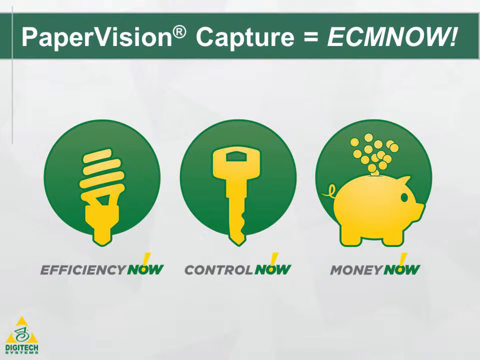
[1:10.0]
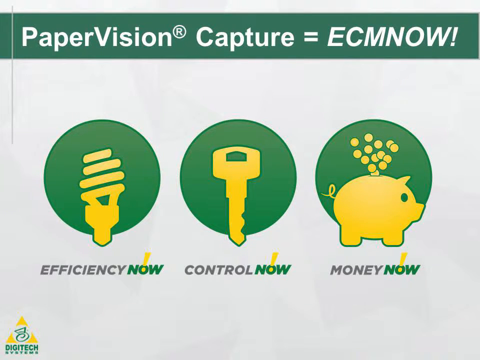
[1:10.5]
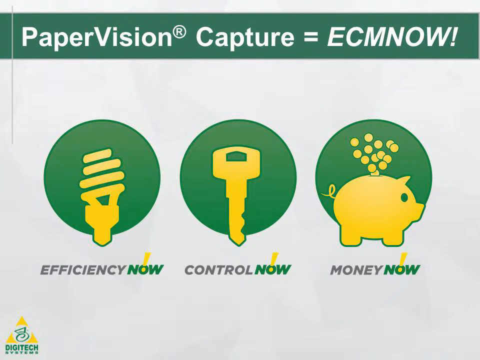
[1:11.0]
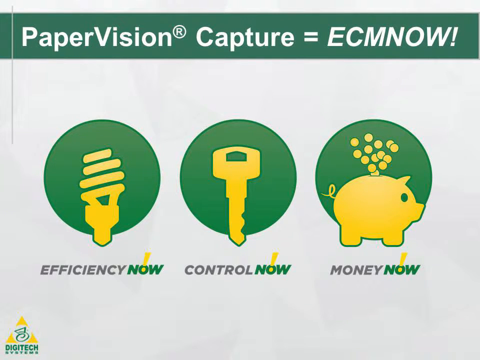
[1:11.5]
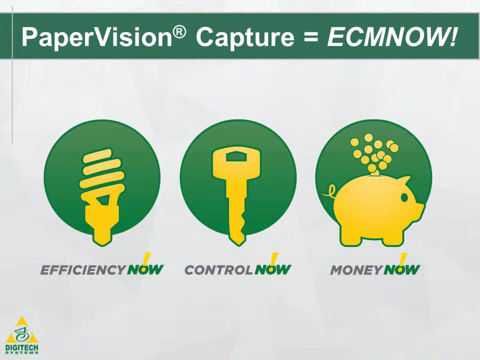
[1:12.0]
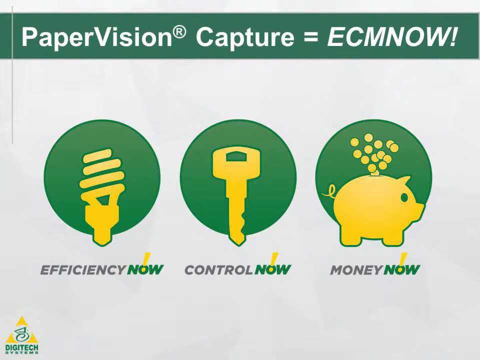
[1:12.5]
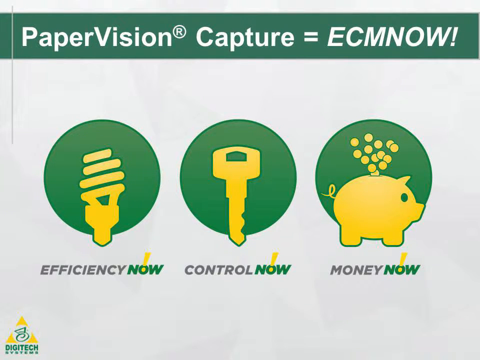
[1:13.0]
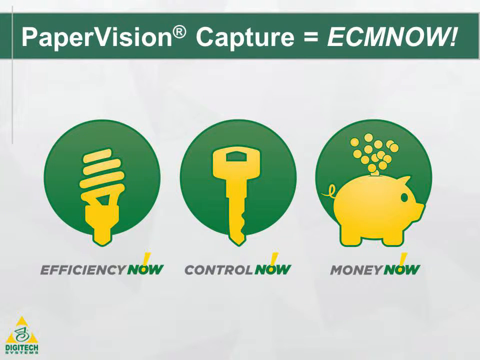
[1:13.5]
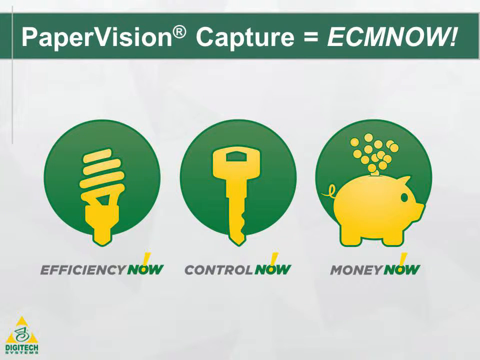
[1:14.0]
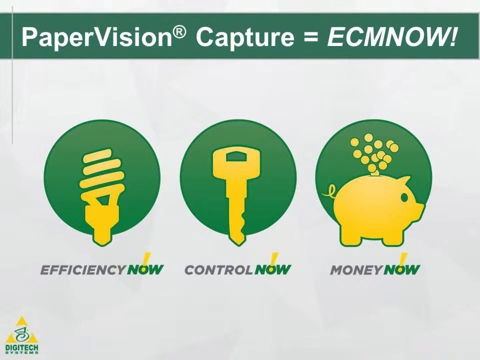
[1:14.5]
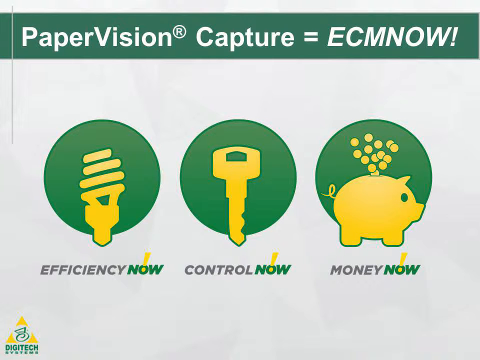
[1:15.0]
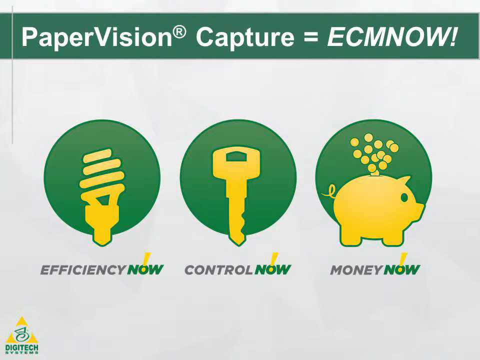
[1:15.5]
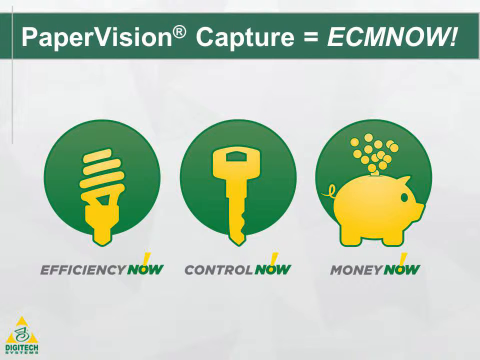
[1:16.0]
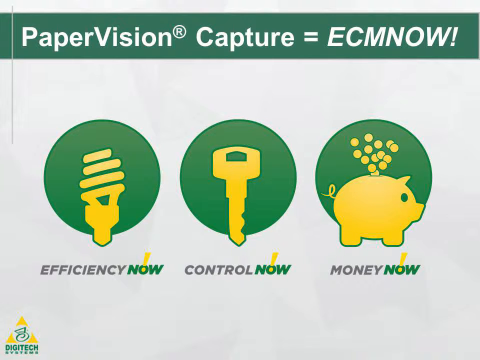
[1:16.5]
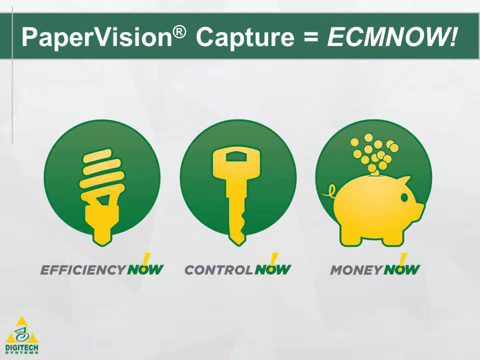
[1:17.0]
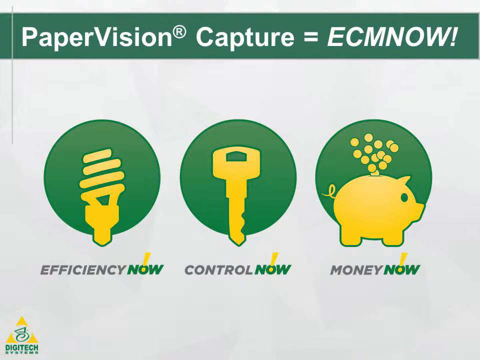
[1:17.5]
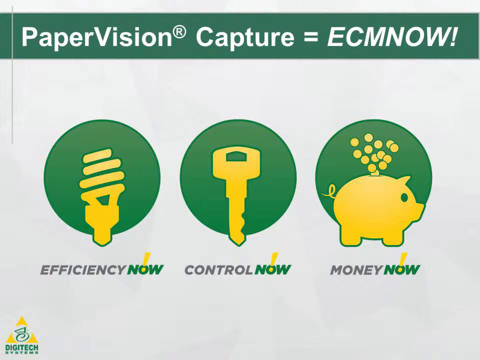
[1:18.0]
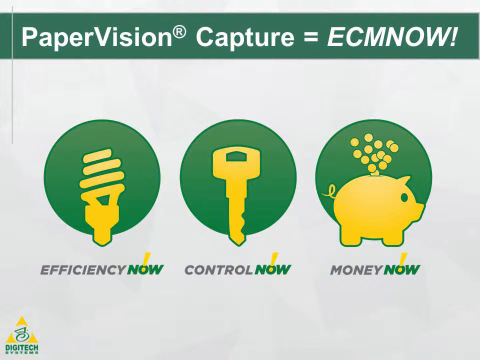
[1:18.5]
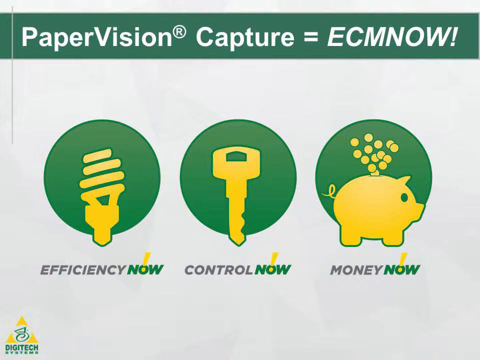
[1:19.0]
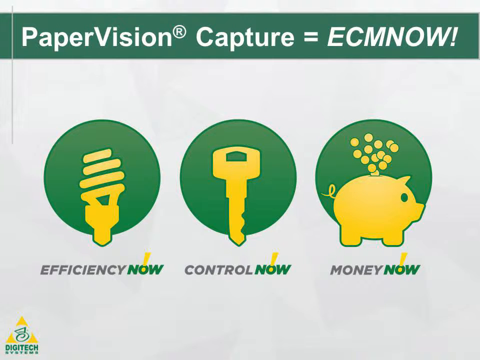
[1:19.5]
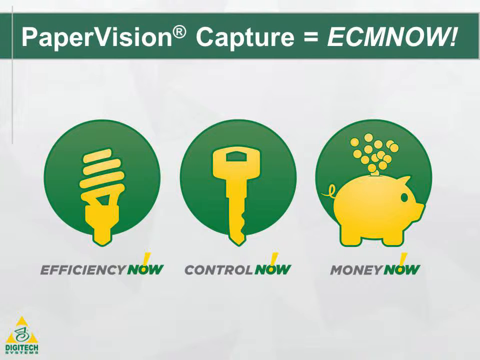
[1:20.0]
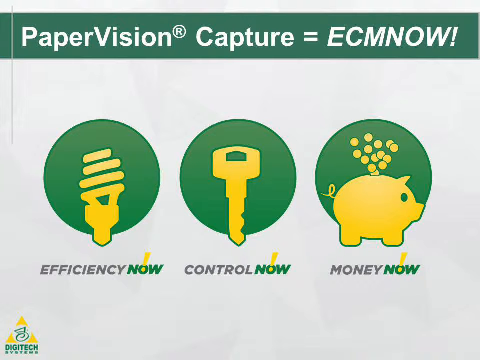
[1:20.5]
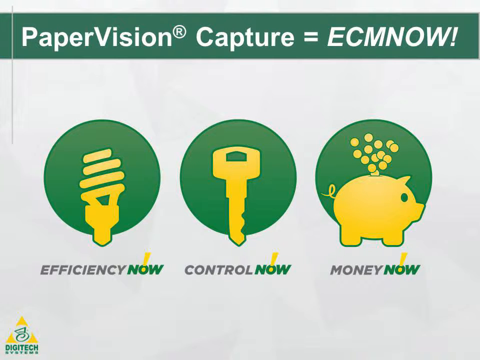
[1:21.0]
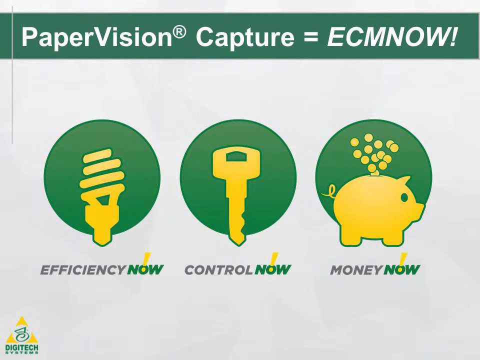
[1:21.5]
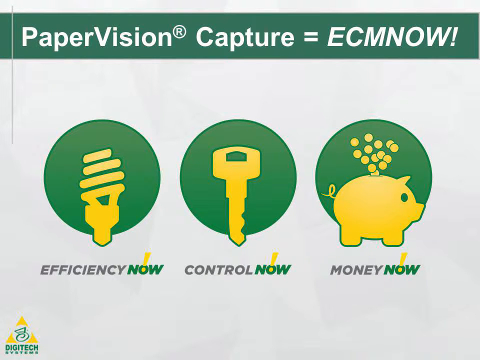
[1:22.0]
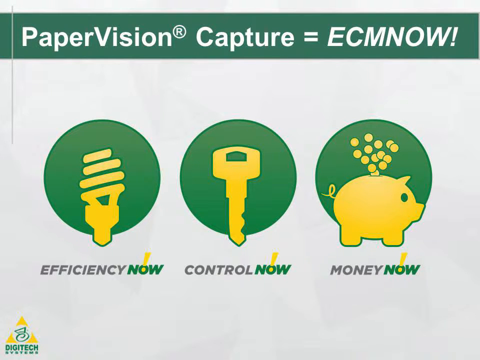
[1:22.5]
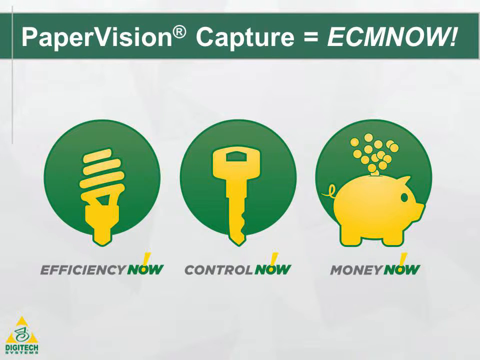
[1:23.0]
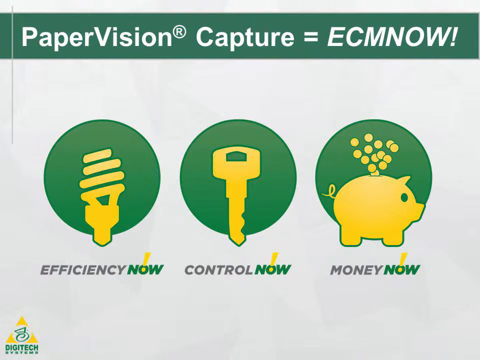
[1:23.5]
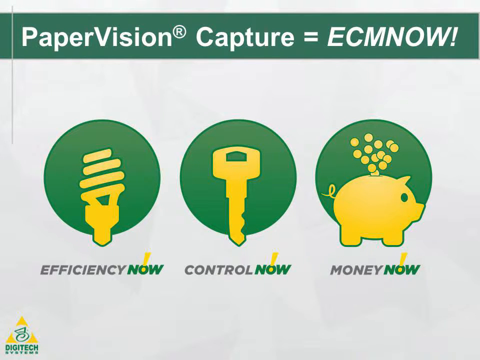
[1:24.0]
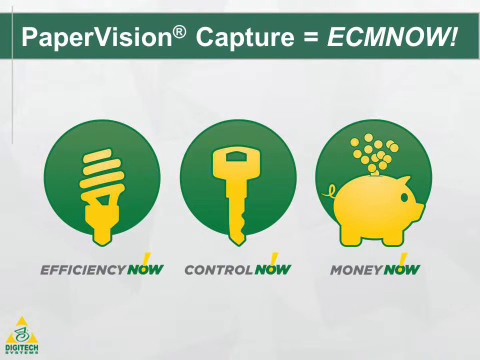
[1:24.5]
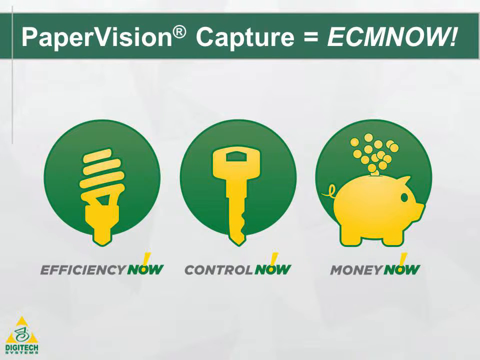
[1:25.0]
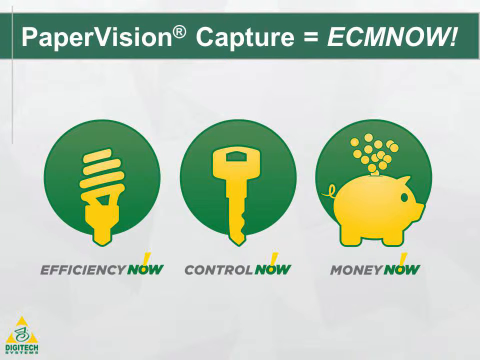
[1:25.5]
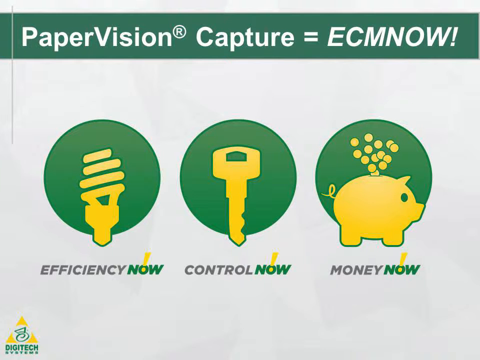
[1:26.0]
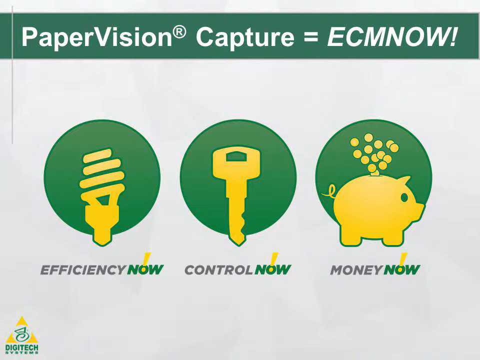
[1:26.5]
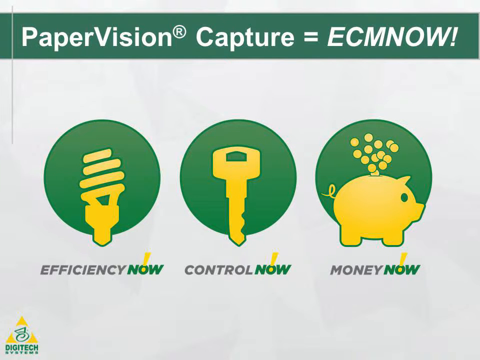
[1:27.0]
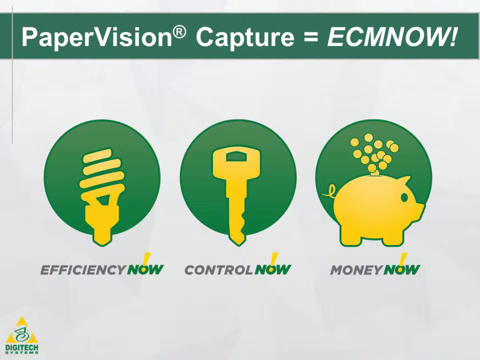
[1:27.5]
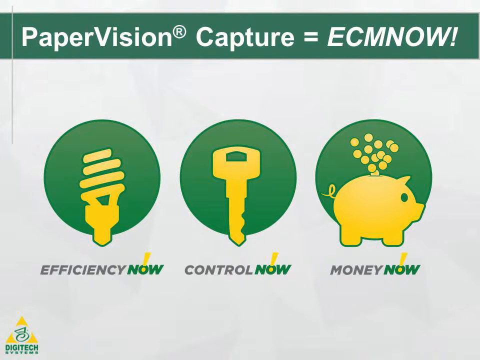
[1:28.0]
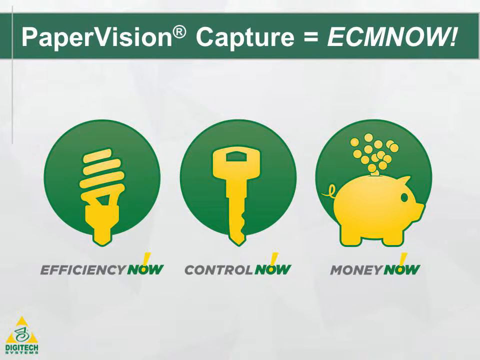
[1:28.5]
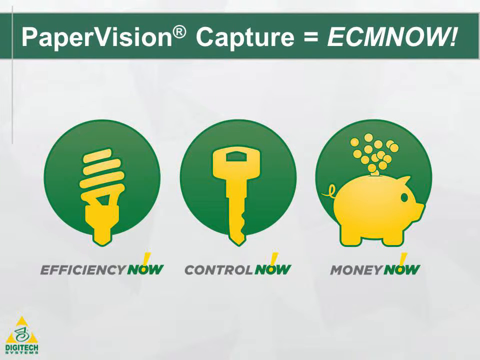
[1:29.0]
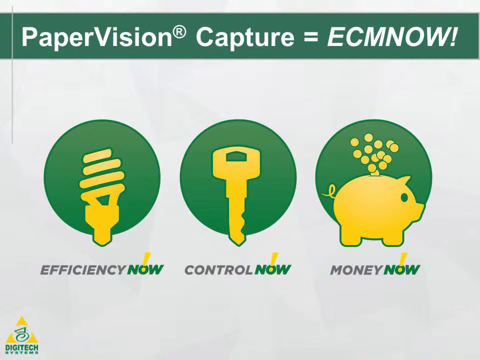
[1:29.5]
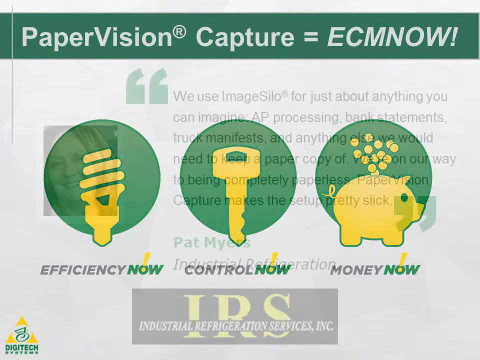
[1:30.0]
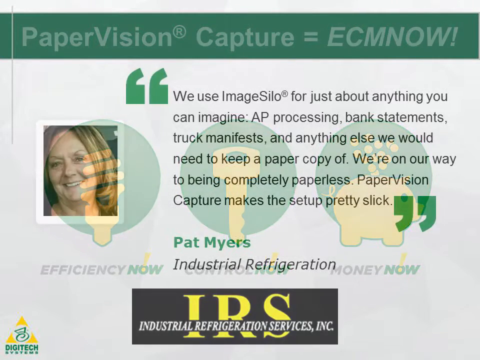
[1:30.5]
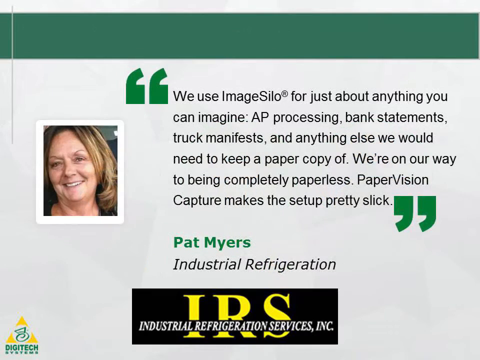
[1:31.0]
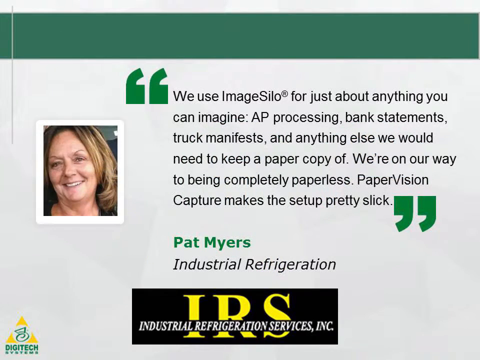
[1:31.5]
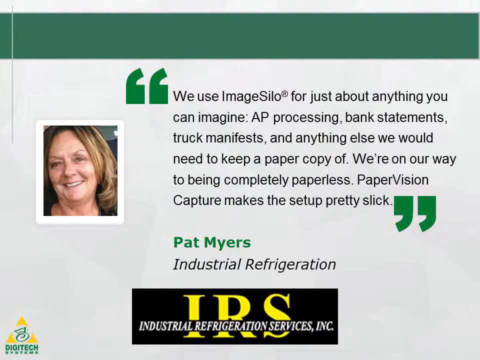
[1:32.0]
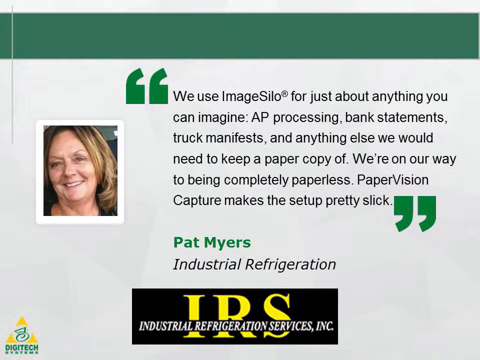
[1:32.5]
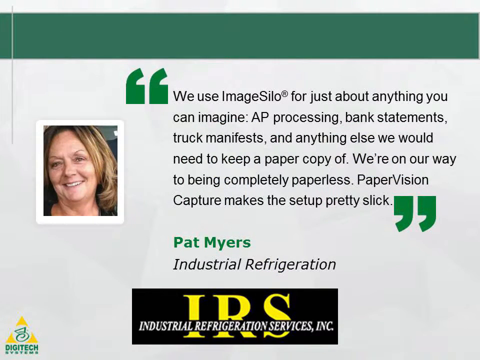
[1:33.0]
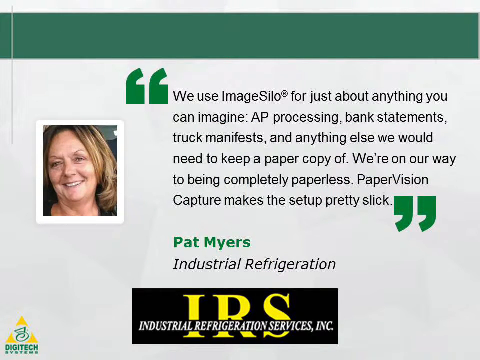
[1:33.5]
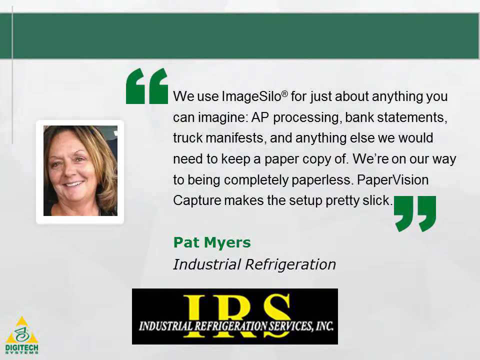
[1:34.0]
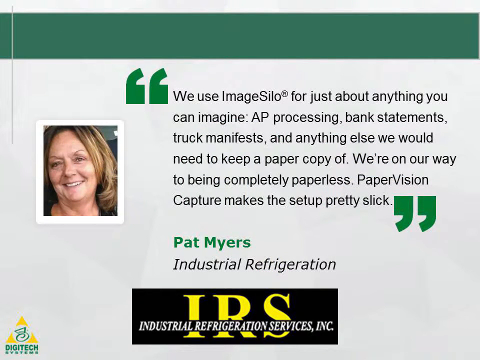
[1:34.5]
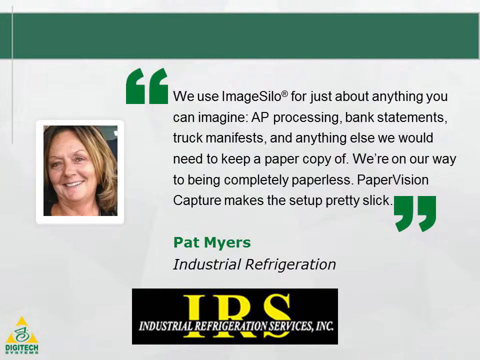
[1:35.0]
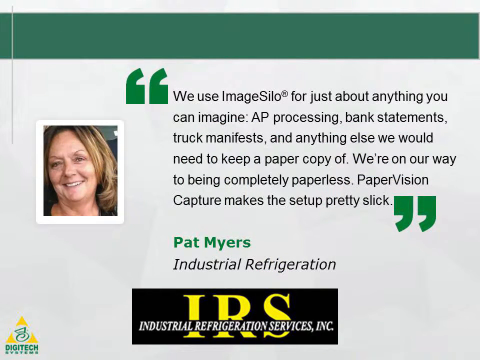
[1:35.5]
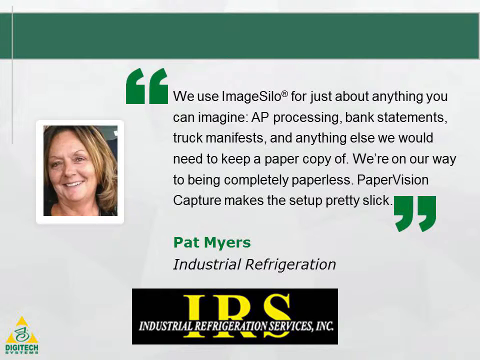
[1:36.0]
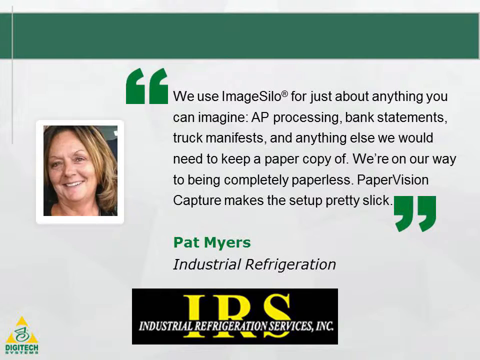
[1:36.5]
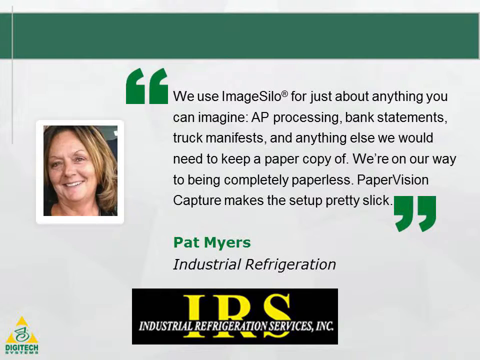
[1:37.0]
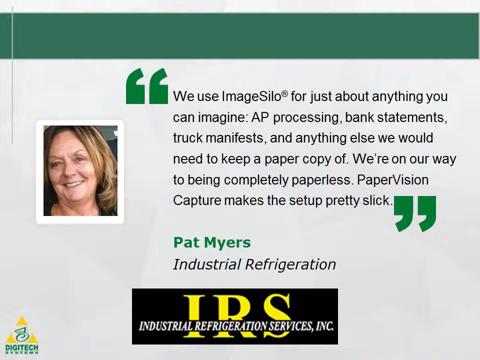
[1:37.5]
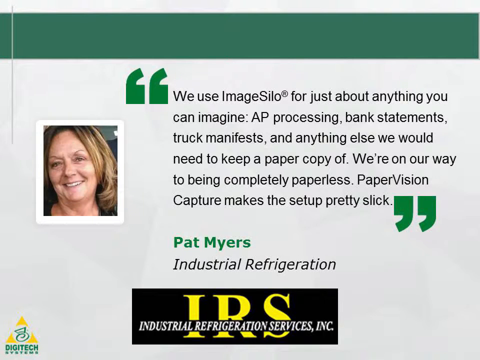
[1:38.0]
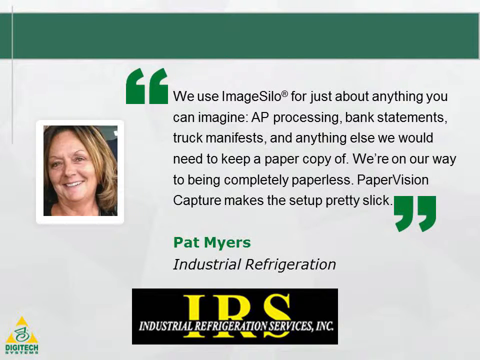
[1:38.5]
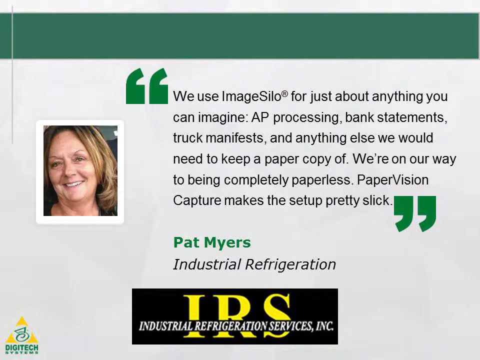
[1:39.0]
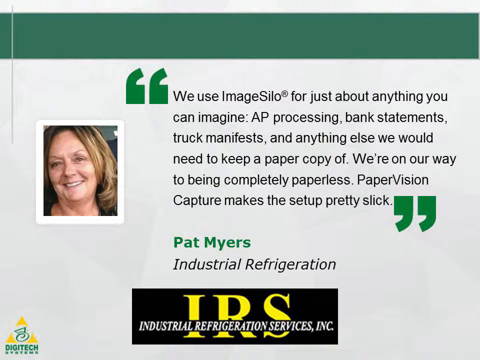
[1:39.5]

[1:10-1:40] A white background has a green banner at the top taking up maybe about a sixth of the screen. White text in it reads "pay per vision" followed by a registered trademark symbol, then "capture = ECM now!". Below, on the white background, are three green circles, each with an icon over it: a yellow light bulb on the left, a key that looks yellow in the middle, and a yellow piggy bank or pig on the right that looks like it is having change put into it. Below the icons, from left to right, the text reads "efficiency now", "control now" and "money now". In the very bottom left corner, three triangles form the angles of a triangle, with a white circle inside it containing a green emblem of some kind, and below that, black or green text reads "Digitech".